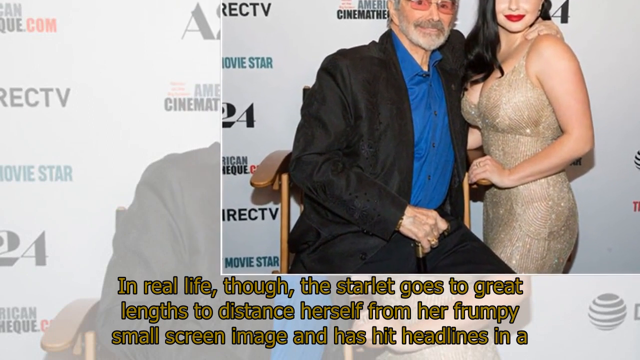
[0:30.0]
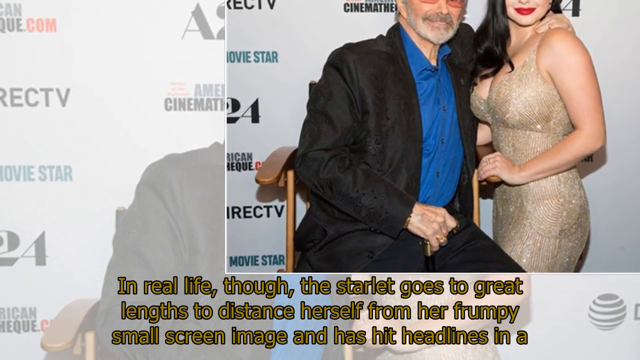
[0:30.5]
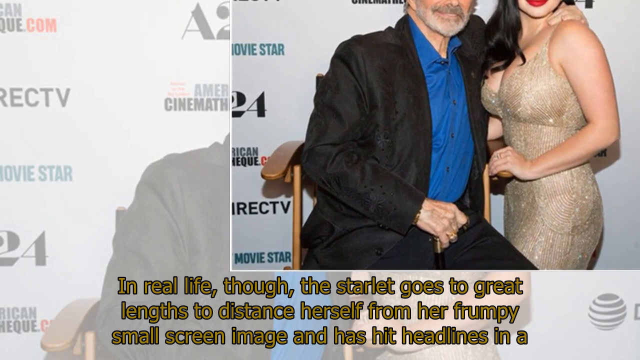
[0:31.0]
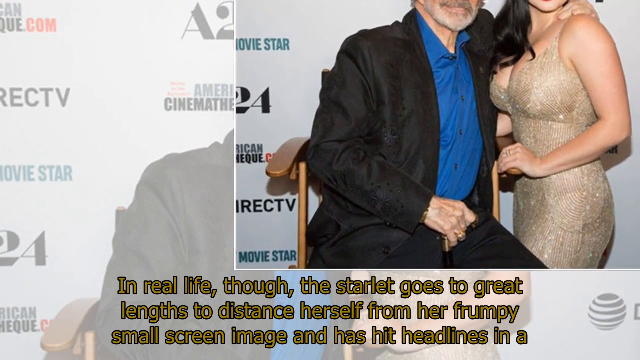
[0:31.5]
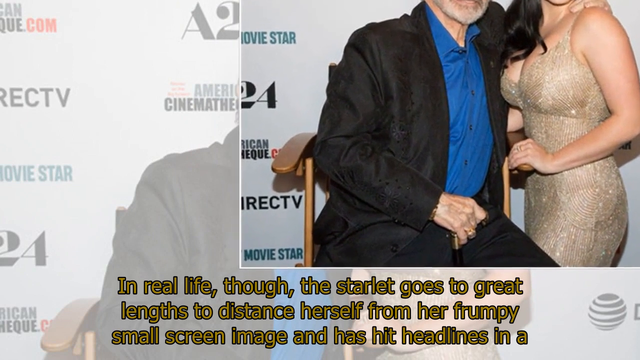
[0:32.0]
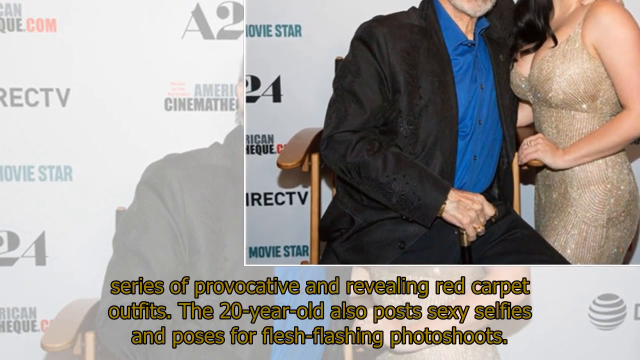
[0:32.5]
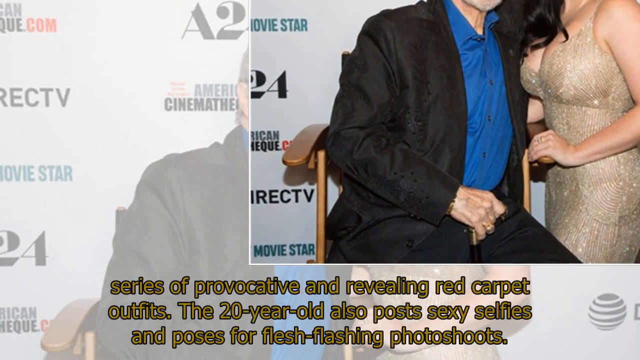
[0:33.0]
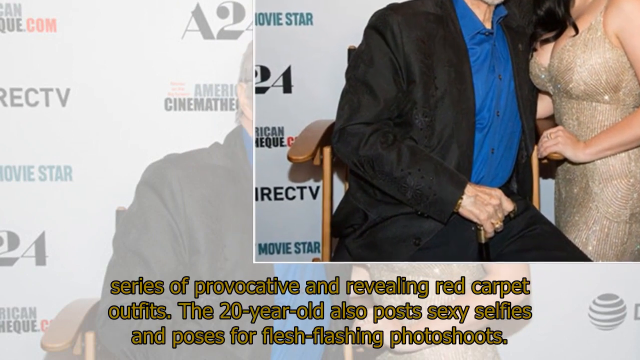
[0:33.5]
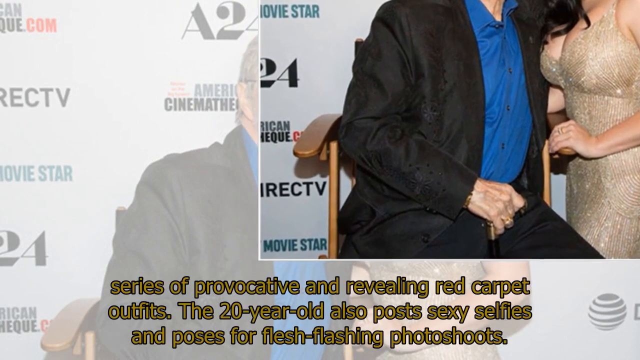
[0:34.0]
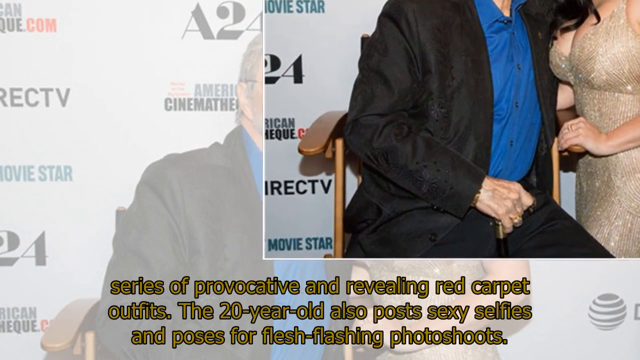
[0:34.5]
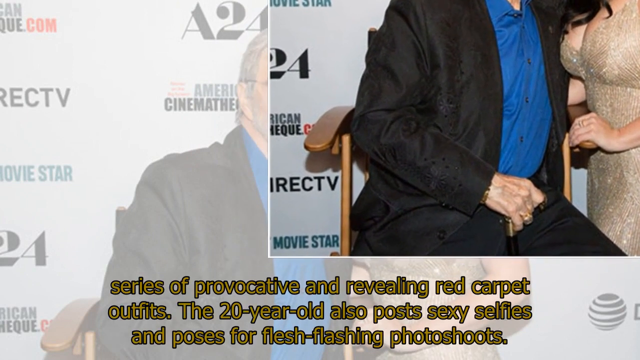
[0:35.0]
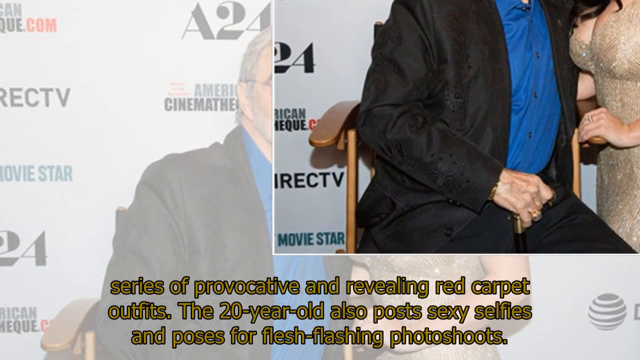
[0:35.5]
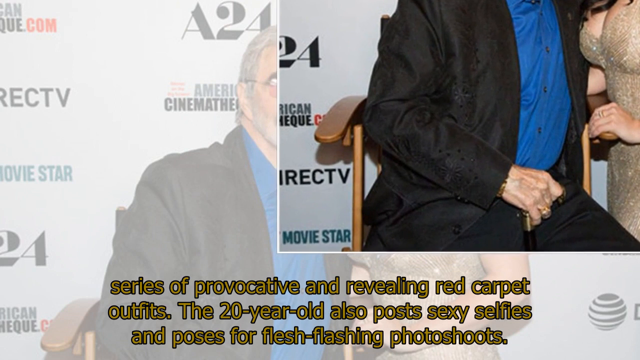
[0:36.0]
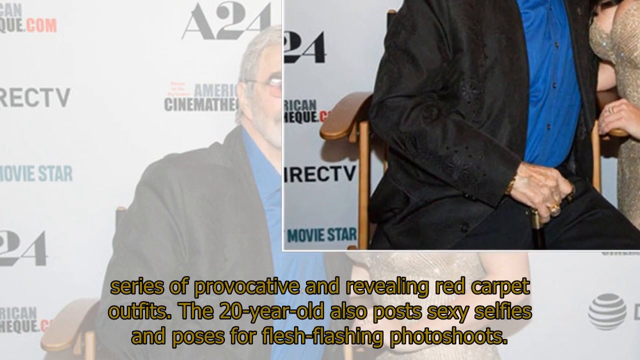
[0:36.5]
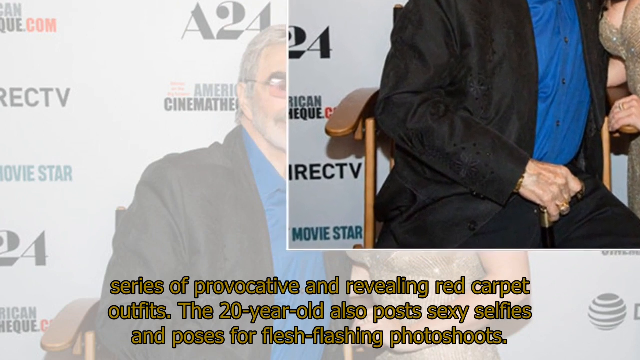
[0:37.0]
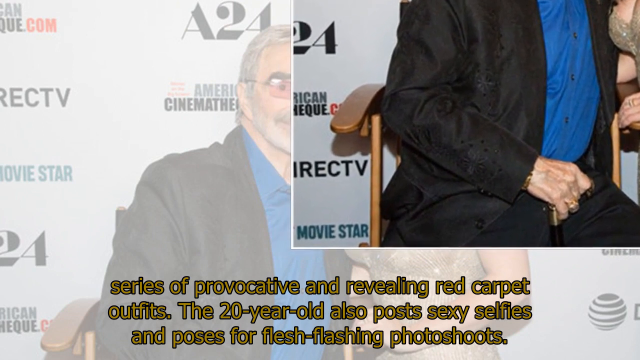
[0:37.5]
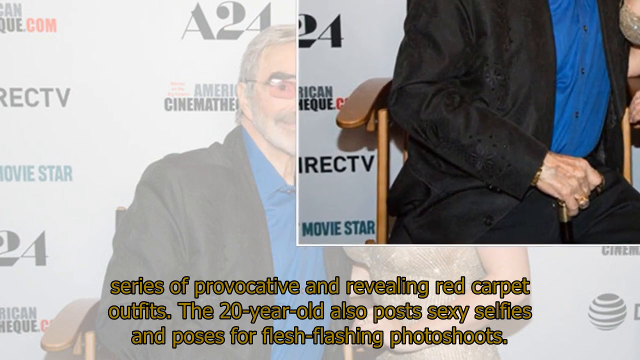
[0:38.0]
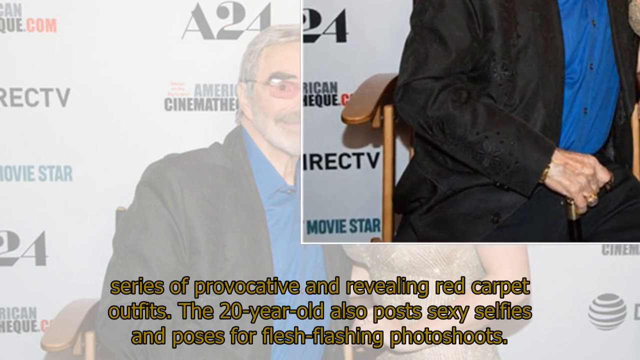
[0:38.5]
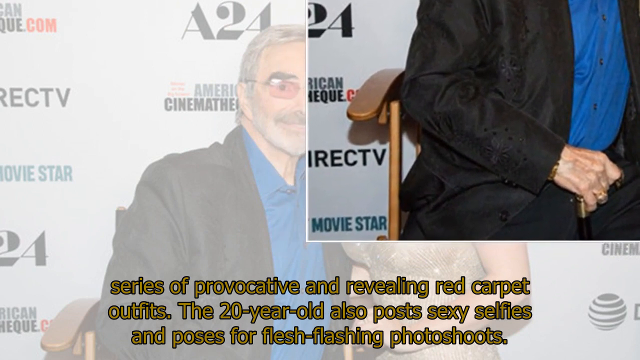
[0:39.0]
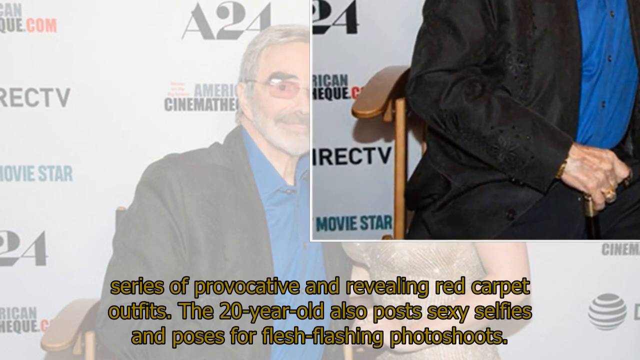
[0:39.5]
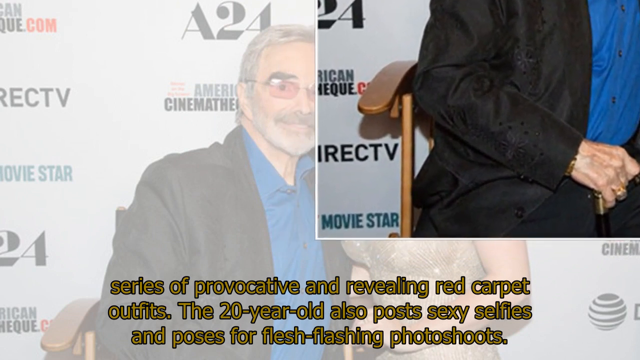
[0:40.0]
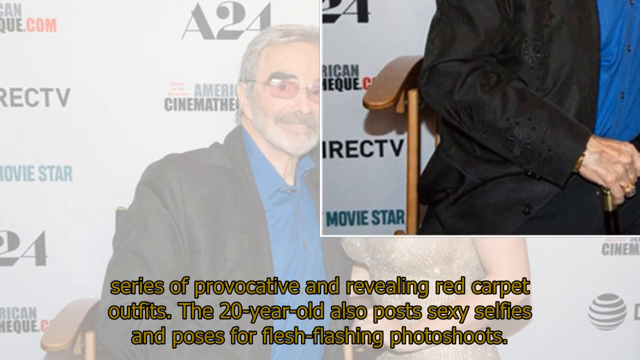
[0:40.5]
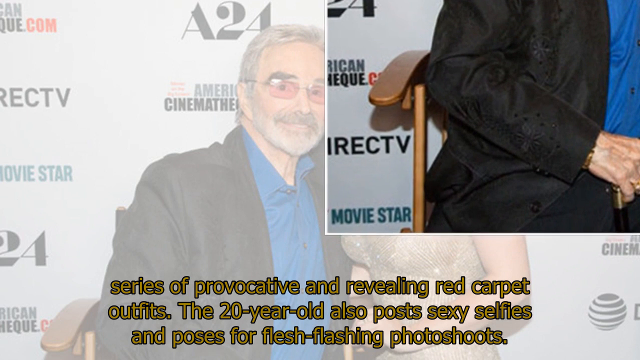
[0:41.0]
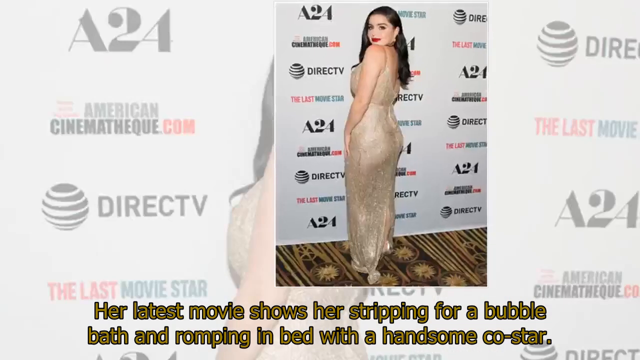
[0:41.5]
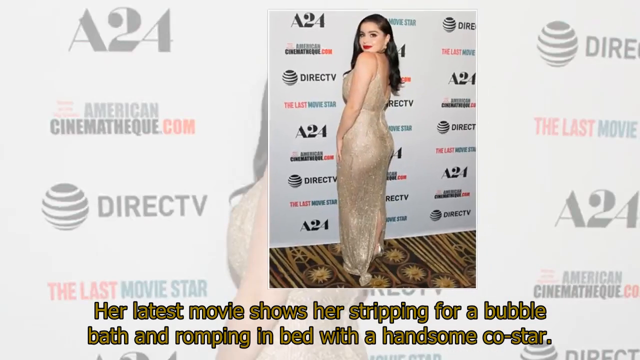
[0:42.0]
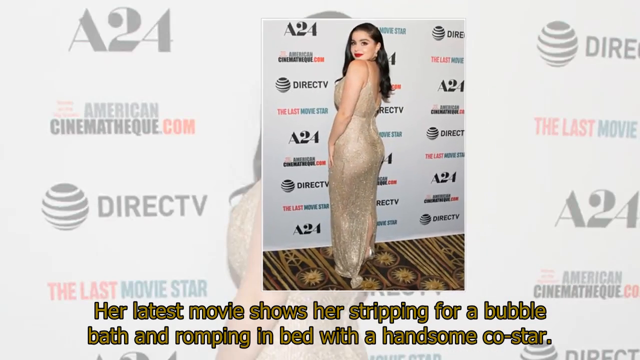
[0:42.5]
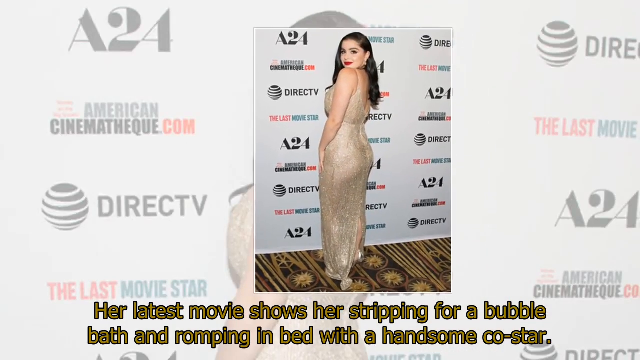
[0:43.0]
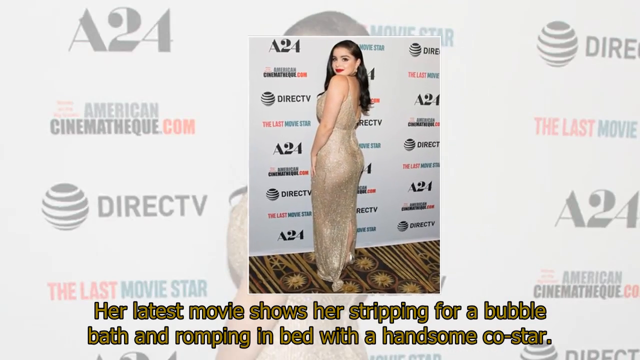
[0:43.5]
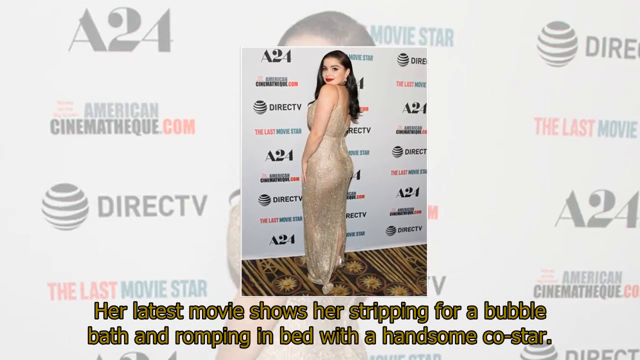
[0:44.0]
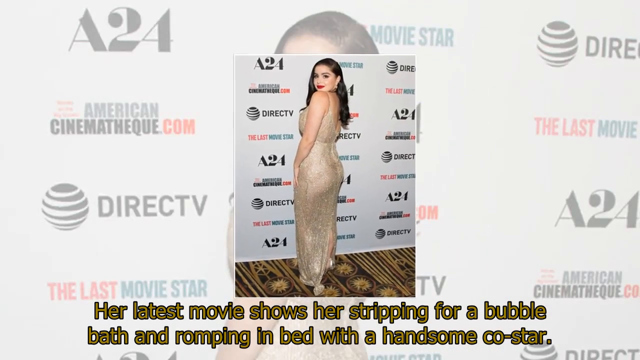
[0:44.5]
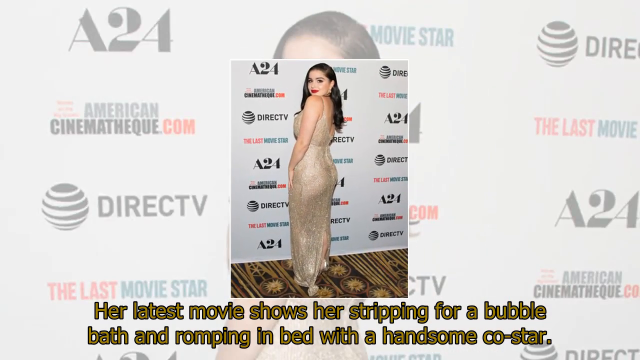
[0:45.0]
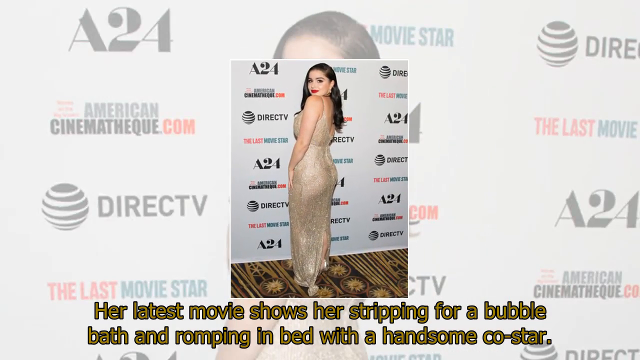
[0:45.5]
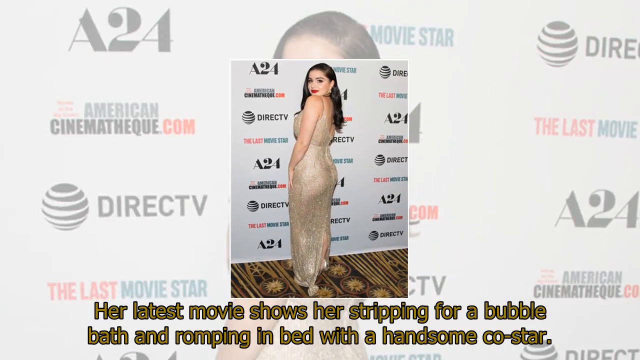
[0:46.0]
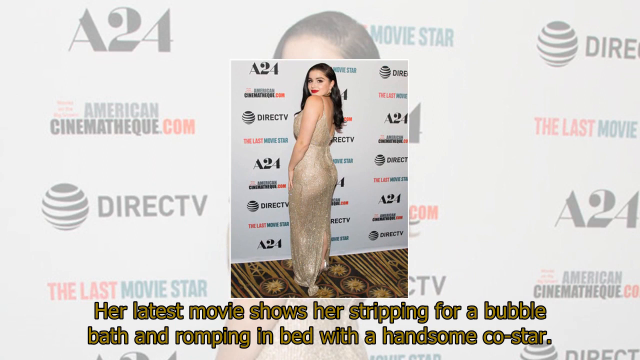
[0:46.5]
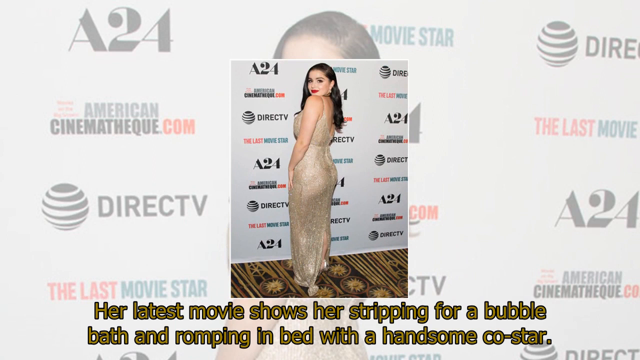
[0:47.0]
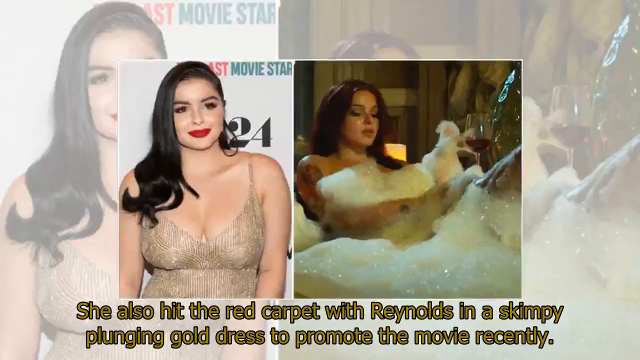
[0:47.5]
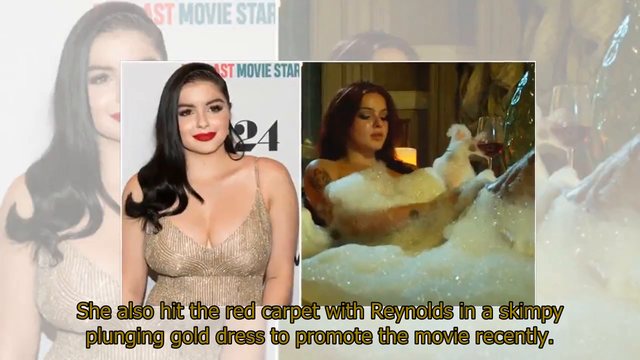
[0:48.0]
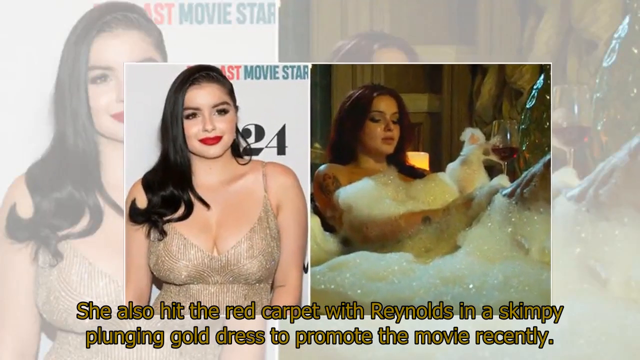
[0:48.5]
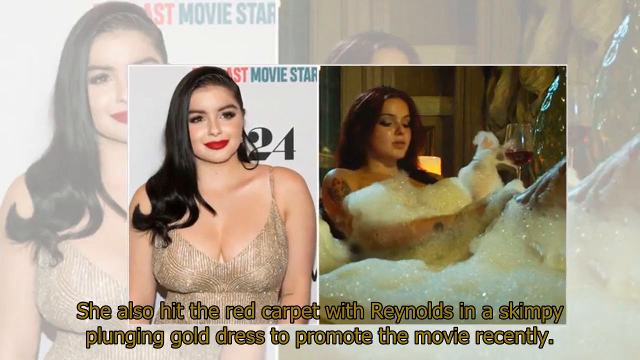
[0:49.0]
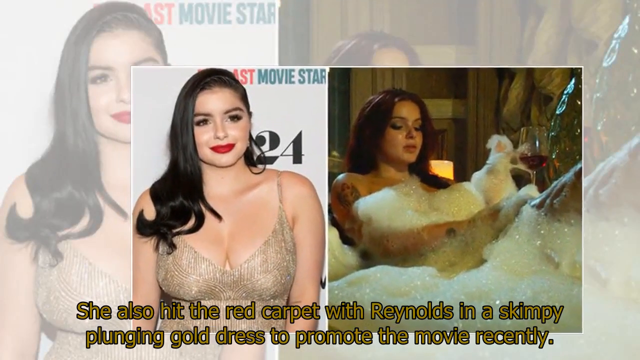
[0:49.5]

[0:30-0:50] The woman is shown posing for a picture, and the picture is from DirecTV. The text "A24" is visible. Written text describes her latest movie, mentioning a bubble bath scene and a bed scene with a co-star, and says that the 20-year-old also posts sexy selfies and fashion photoshoots.